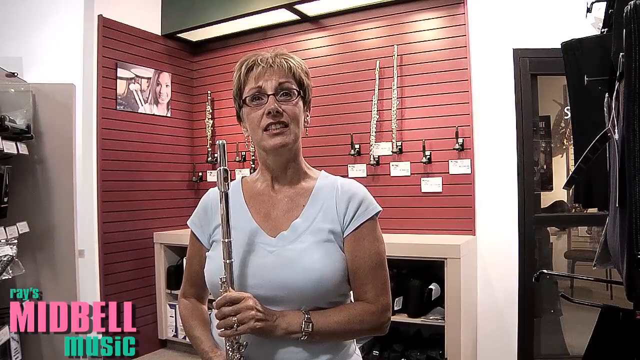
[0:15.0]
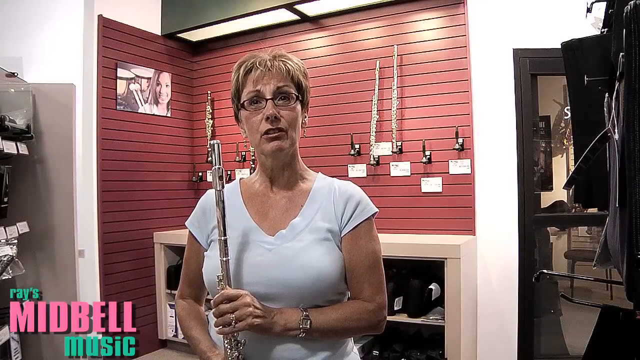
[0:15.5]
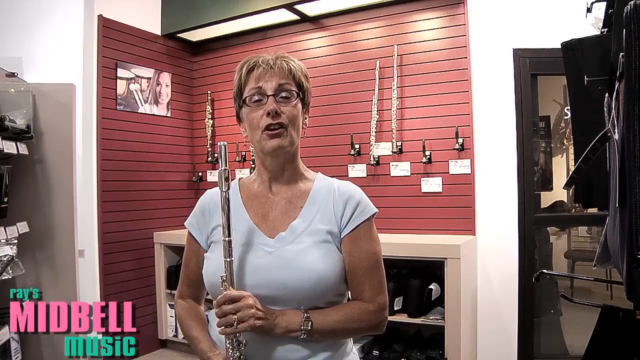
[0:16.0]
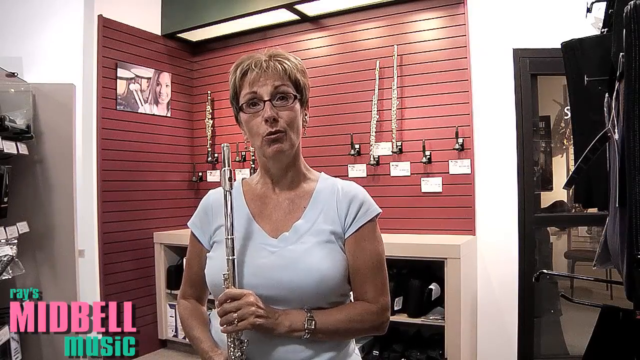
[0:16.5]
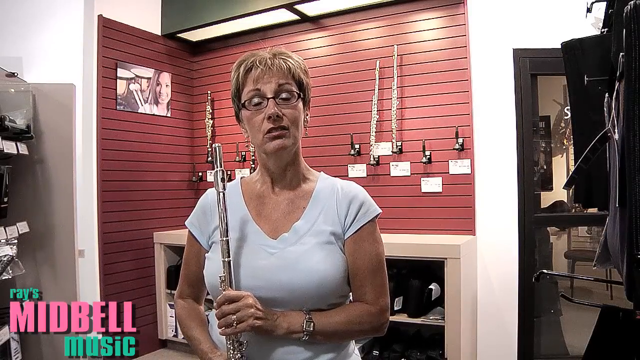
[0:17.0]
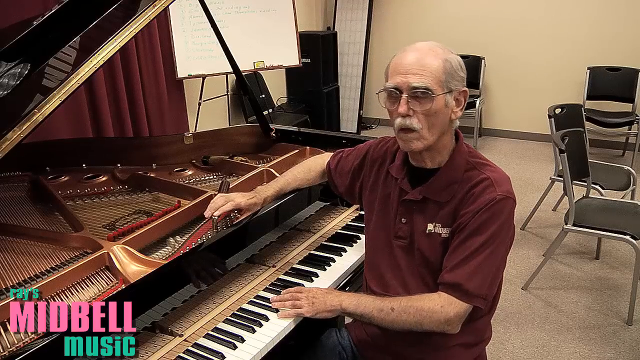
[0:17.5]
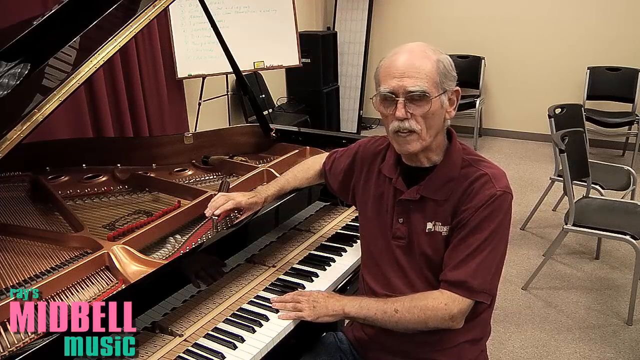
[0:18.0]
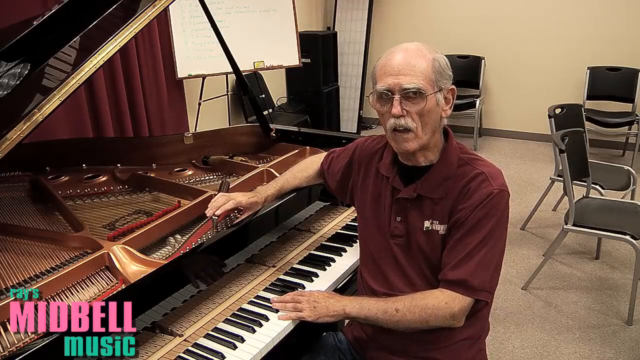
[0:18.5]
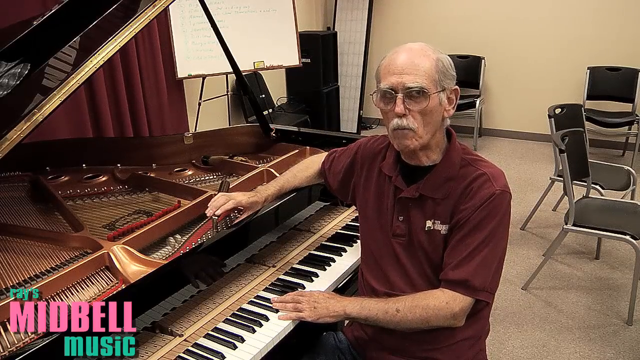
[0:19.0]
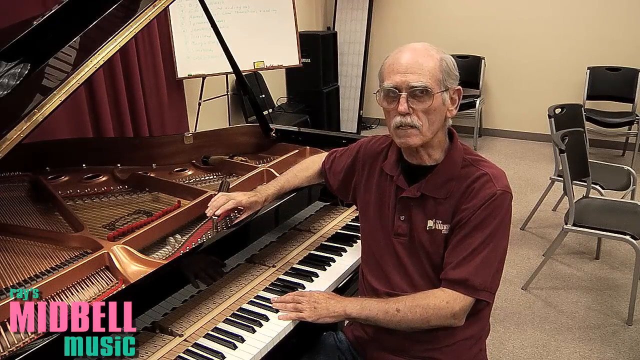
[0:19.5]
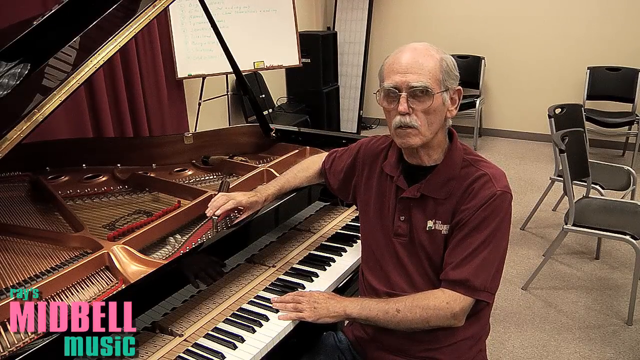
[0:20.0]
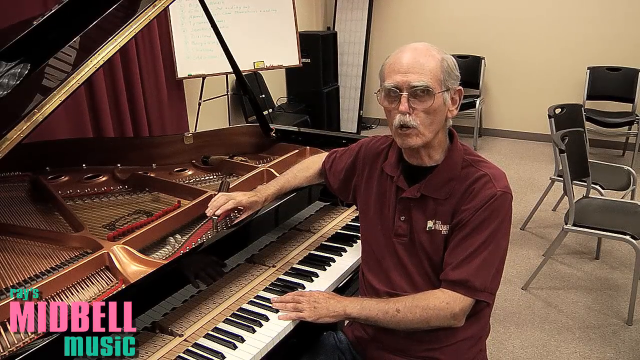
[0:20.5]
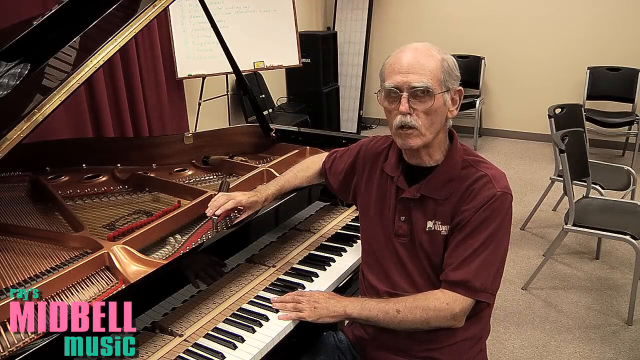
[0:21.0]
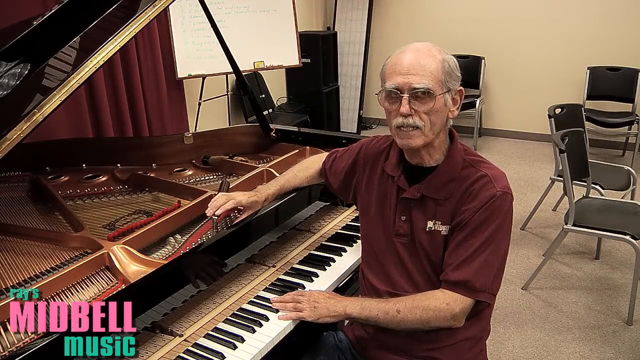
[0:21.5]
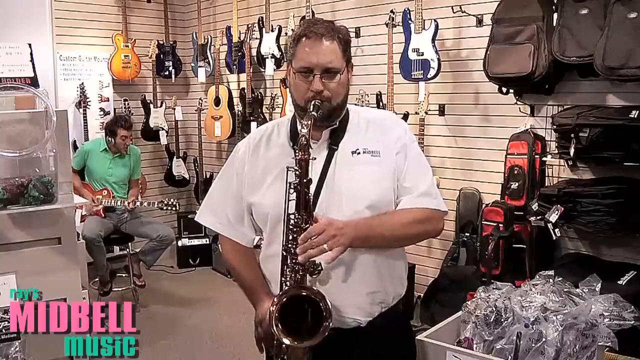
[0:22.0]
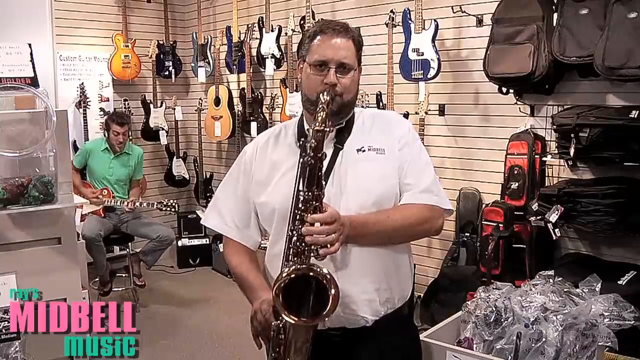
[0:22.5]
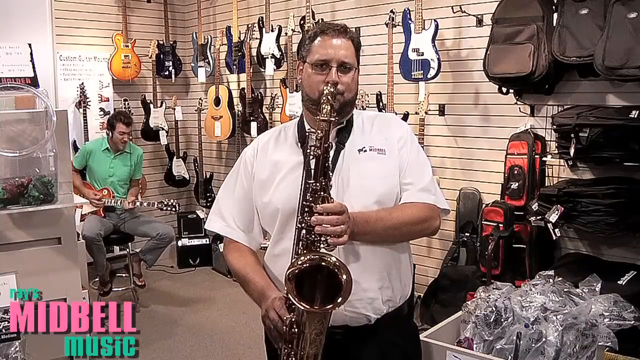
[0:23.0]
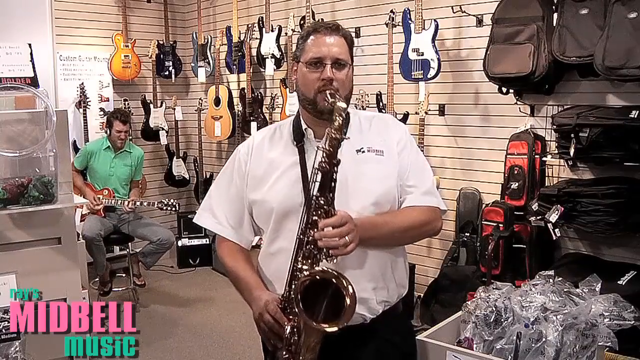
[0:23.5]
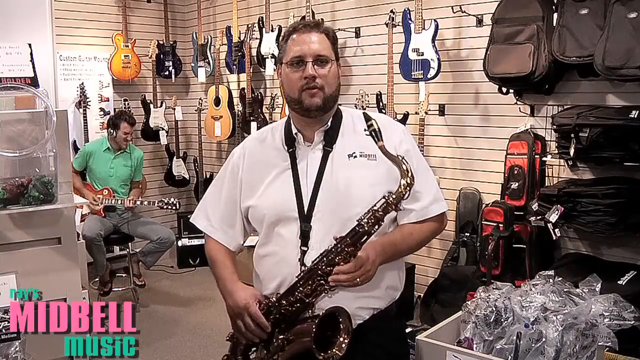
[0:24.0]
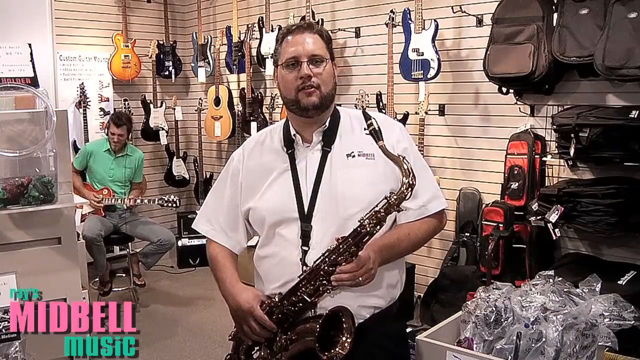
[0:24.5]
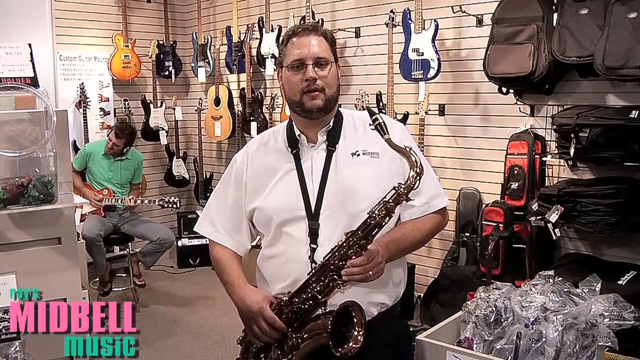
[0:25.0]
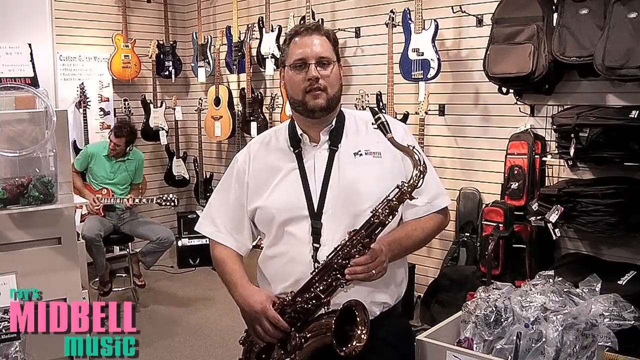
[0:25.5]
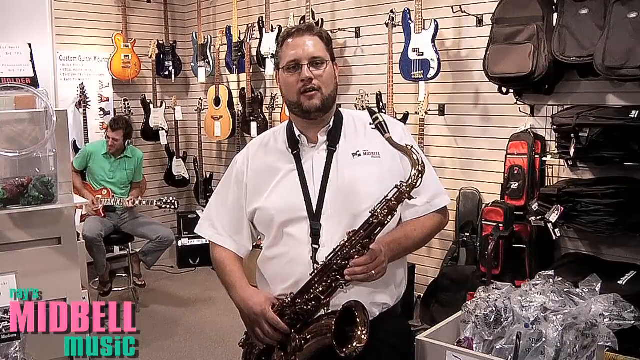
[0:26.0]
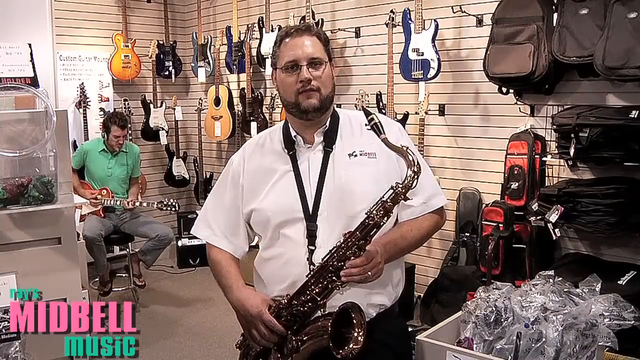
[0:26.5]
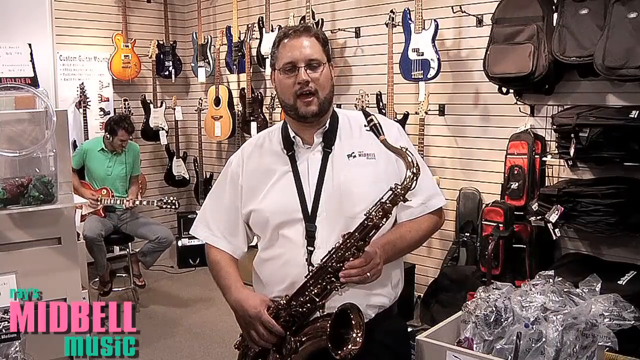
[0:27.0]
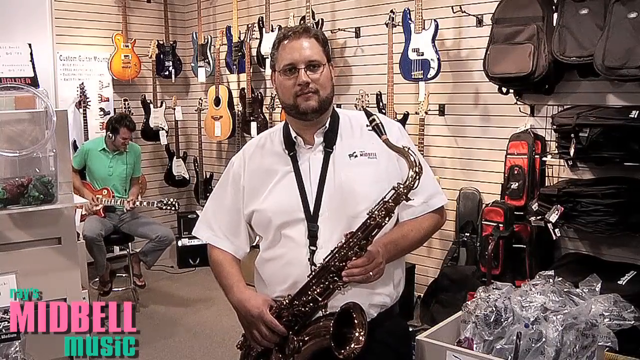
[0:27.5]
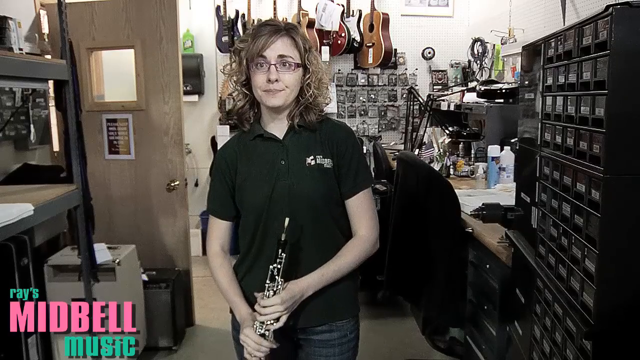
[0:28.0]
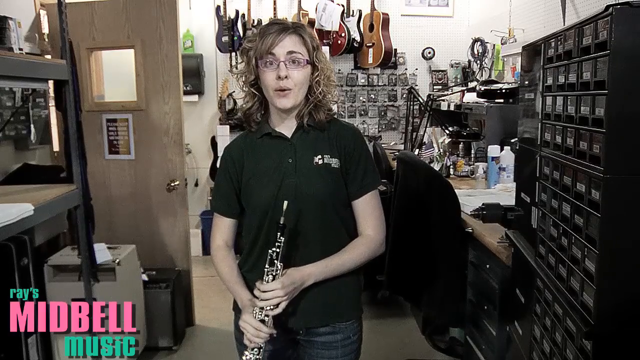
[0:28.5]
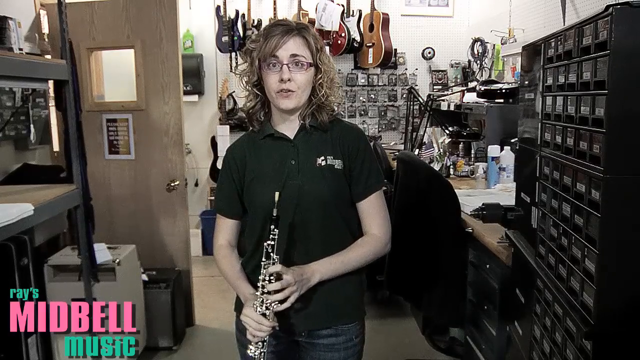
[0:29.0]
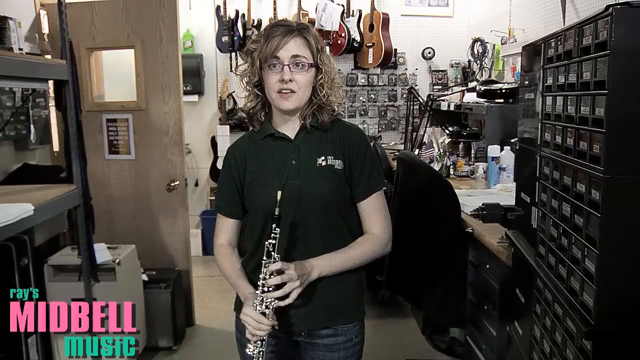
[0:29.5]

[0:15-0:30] Inside the Midbell shop, a series of direct interviews appears to feature both store employees and customers. First is an older man in a red shirt, possibly the owner or a manager, sitting at a piano, facing it and kind of turned sideways to the camera, talking. The video then cuts to a man in a white collared shirt playing a saxophone, while a man in a green shirt sits behind him jamming on what looks to be a guitar. The saxophone player plays for a second, stops, and says something into the camera; guitars are behind him. Next is a woman in a black shirt holding what is apparently a flute, also being interviewed and talking into the camera. There appear to be four different people in the store, all seemingly being interviewed by whoever is holding the camera.